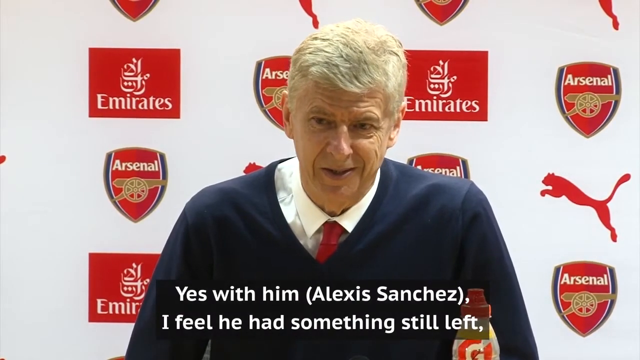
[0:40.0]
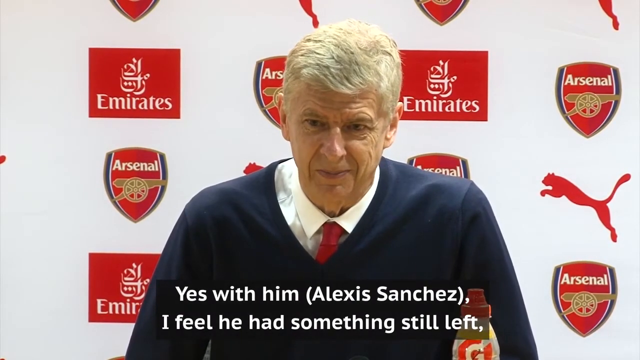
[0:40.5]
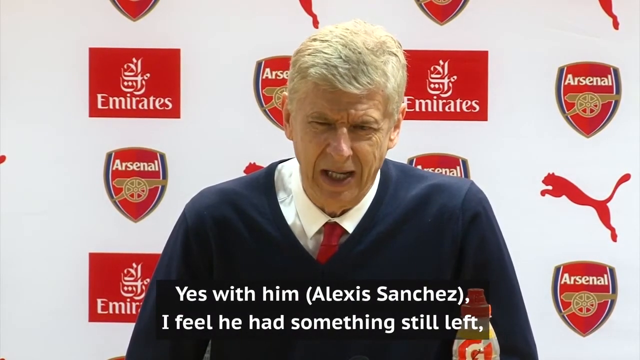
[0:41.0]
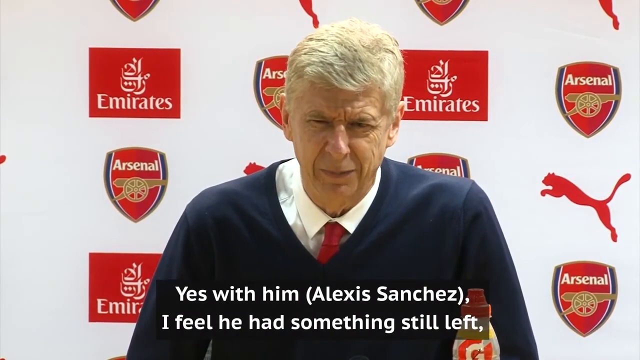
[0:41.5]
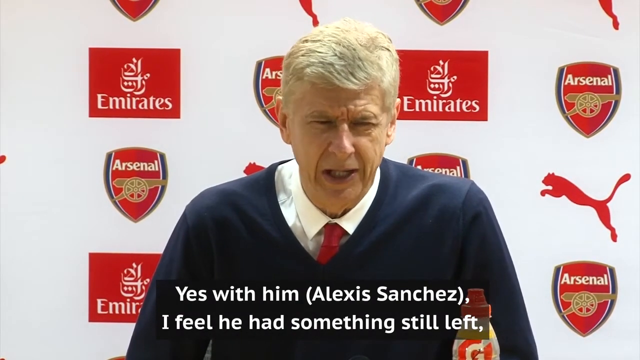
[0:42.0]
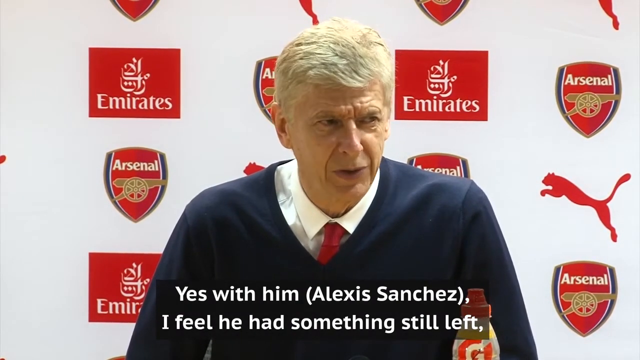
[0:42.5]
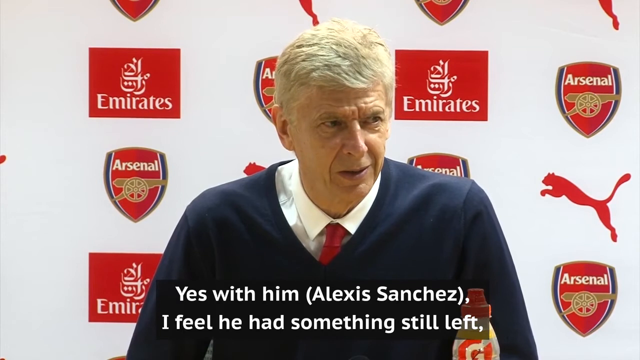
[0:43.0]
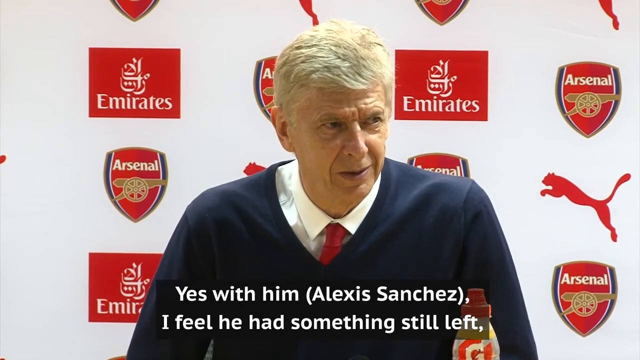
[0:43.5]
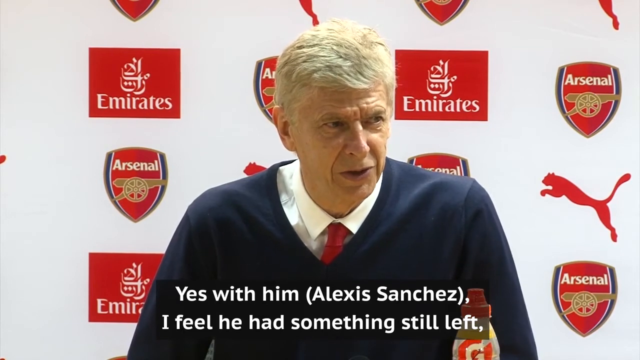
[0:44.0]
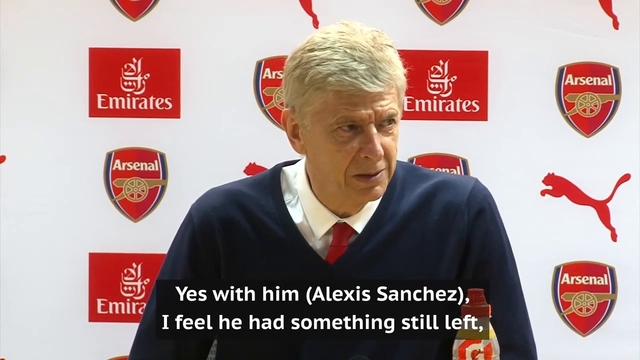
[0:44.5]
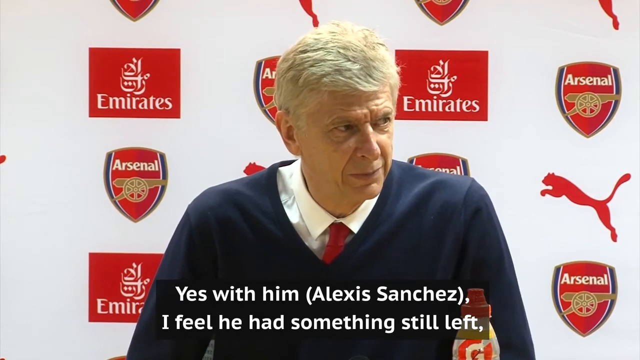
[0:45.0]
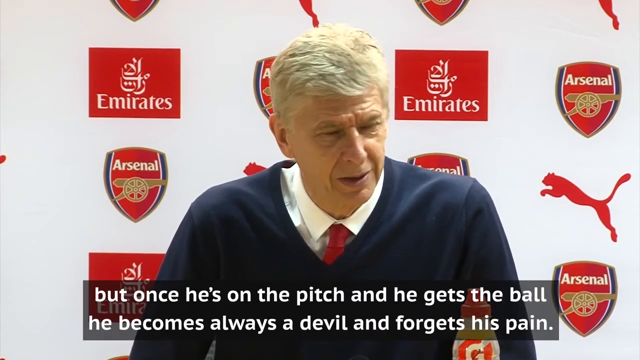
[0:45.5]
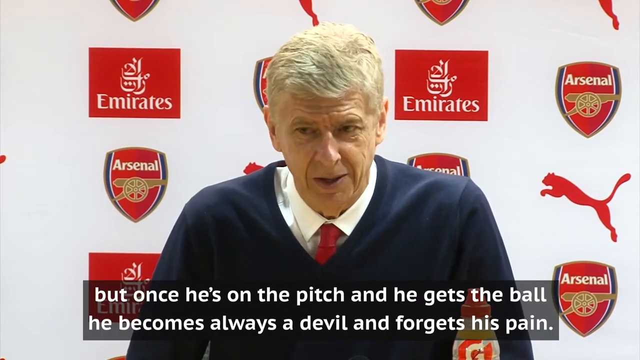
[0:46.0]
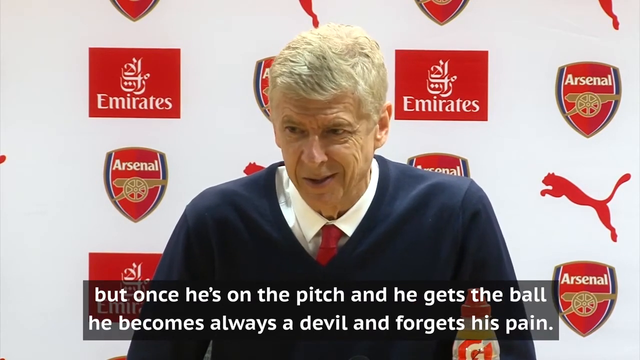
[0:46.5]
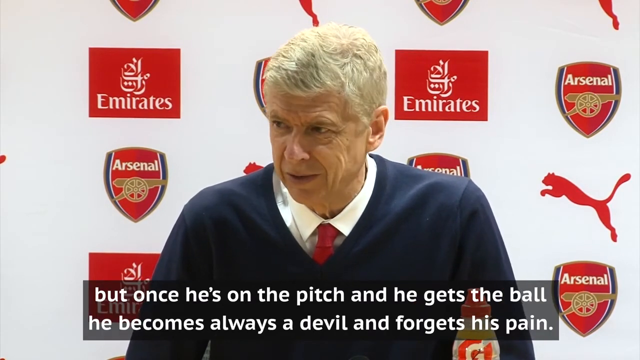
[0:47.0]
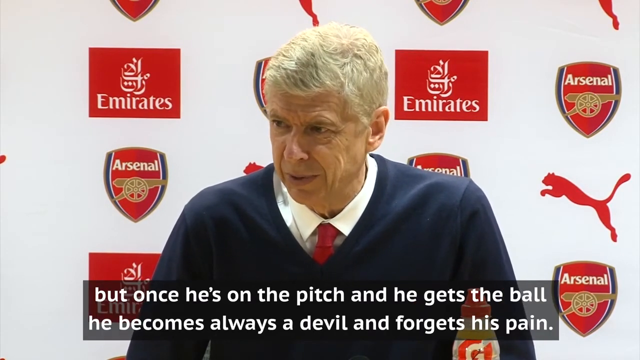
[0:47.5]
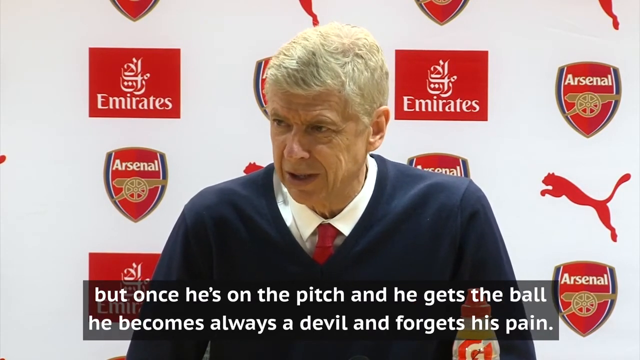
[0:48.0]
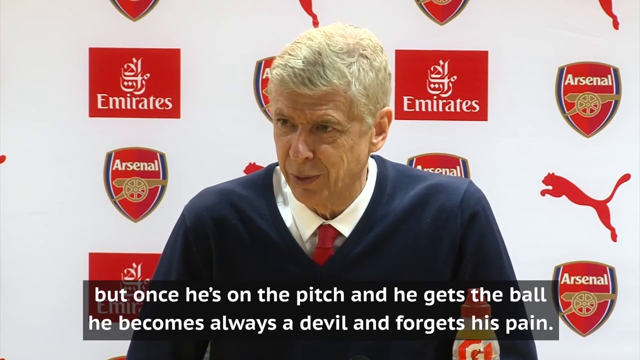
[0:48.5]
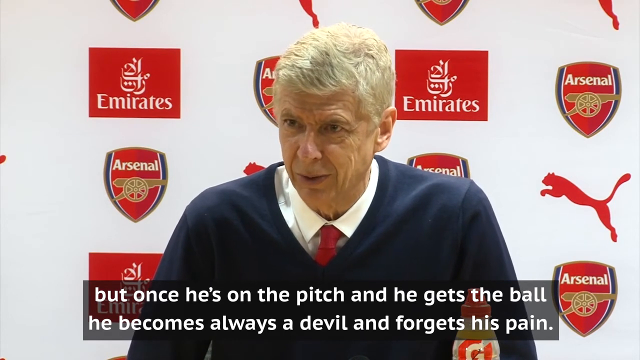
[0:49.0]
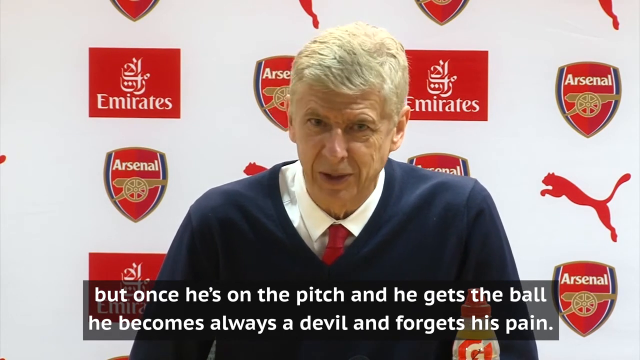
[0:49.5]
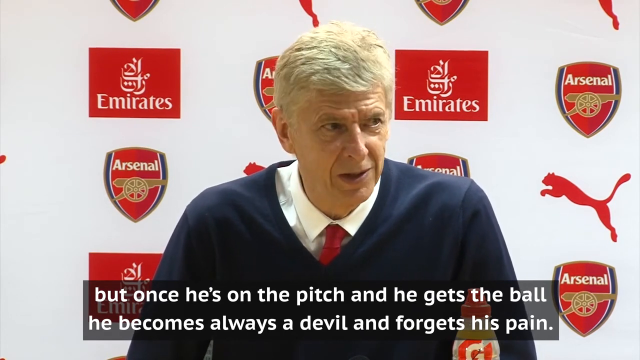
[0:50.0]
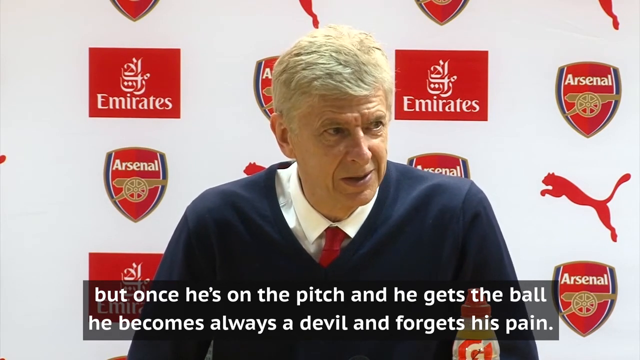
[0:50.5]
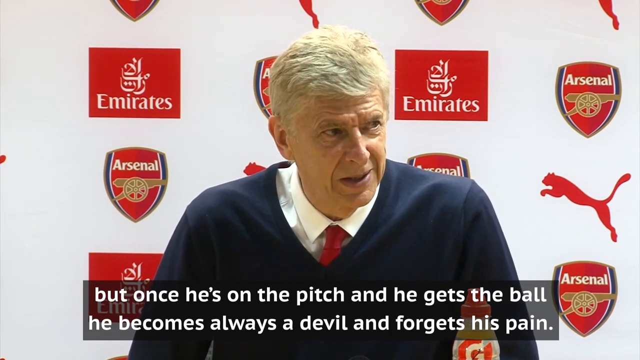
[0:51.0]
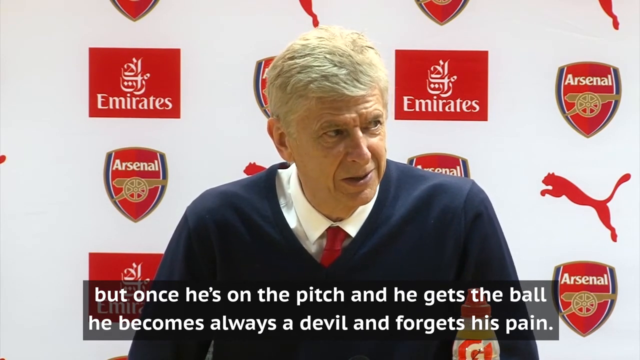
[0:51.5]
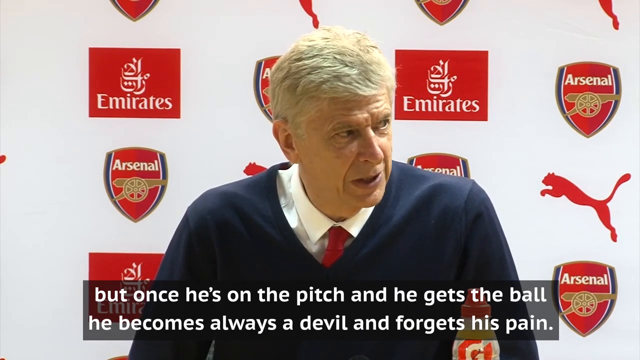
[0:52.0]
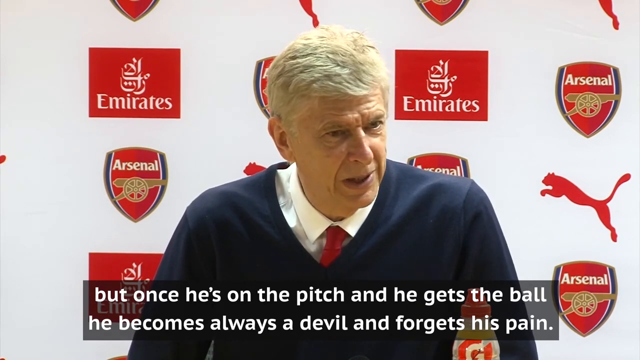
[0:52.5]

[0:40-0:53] Arsene Wenger speaks with a smile on his face, looking a bit more relieved. He continues to sit, not moving much, staying still. He says, "but once he's on the pitch and he gets the ball, he becomes always a devil and forgets his pain." He looks to the right and appears calmer than at the beginning of the interview as the interview ends and the screen fades out.